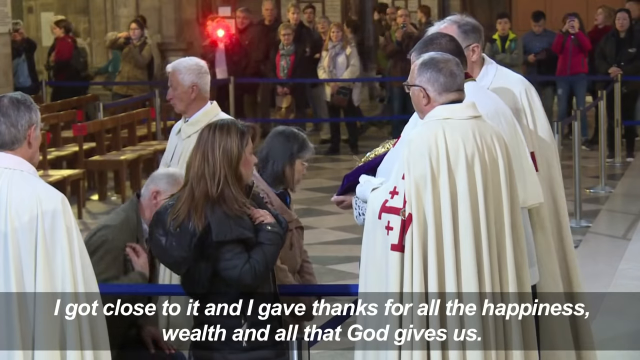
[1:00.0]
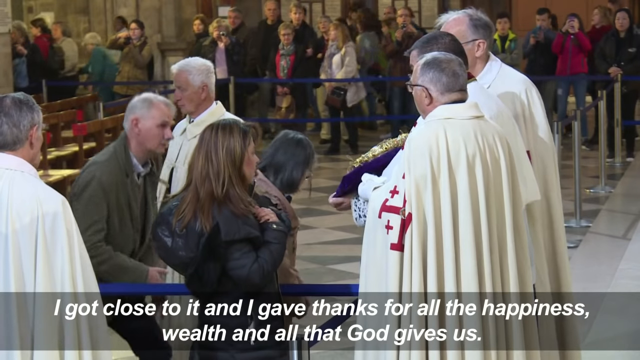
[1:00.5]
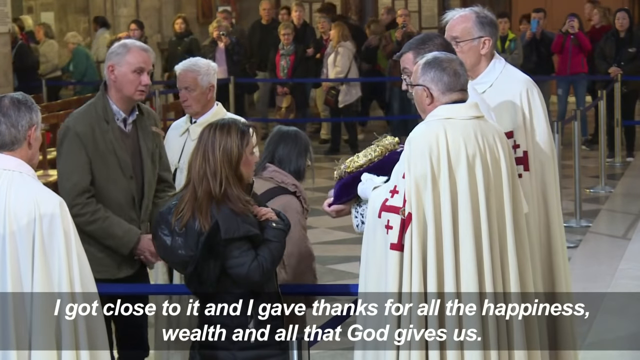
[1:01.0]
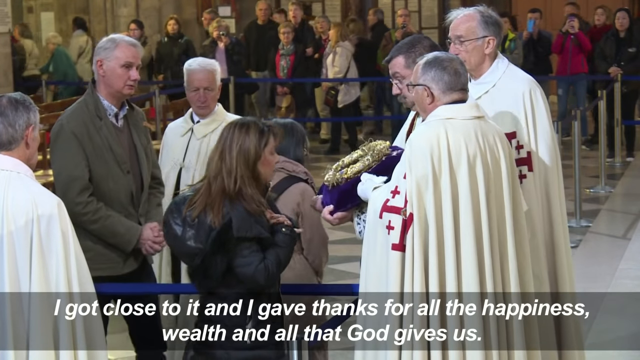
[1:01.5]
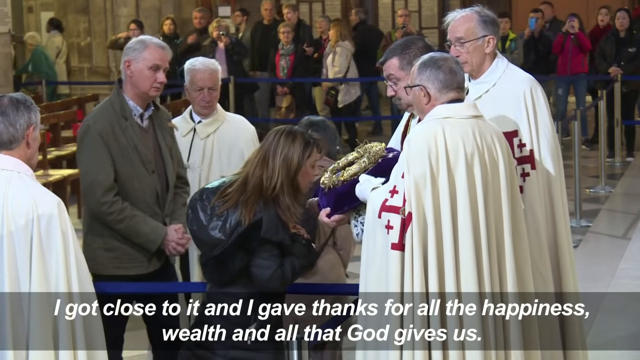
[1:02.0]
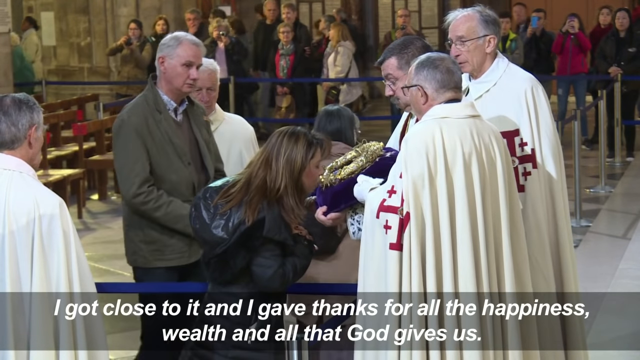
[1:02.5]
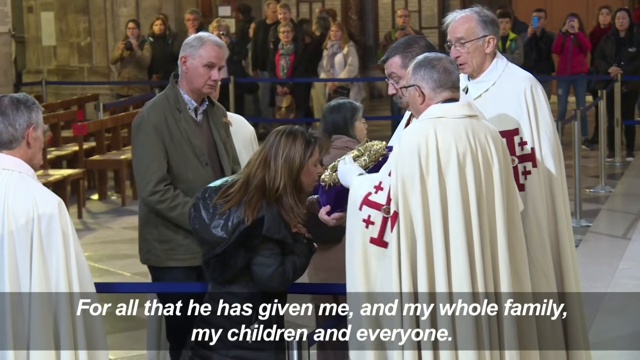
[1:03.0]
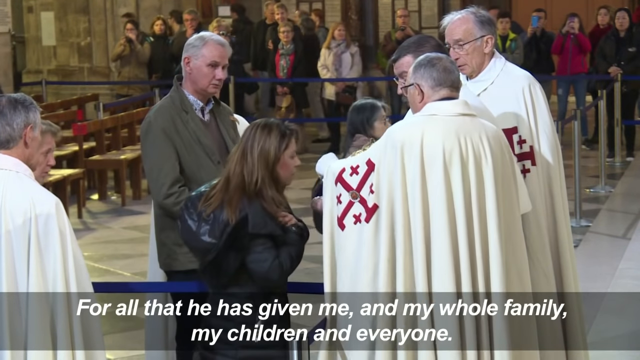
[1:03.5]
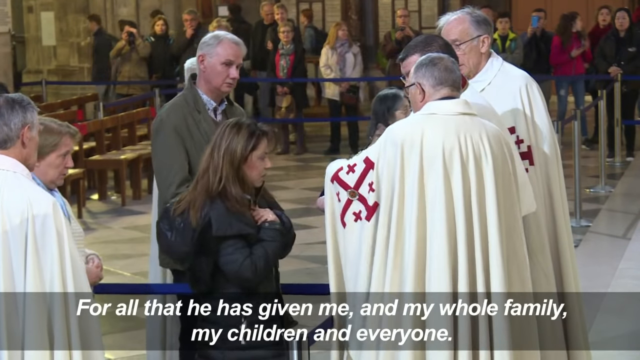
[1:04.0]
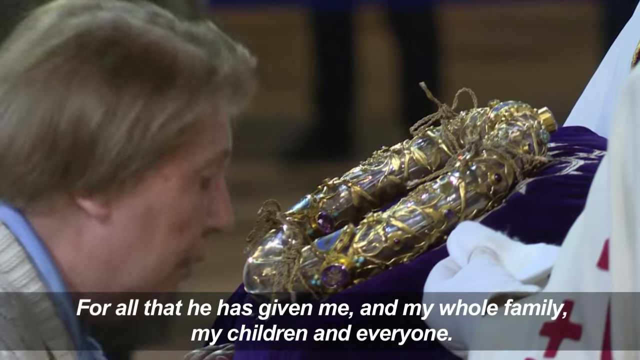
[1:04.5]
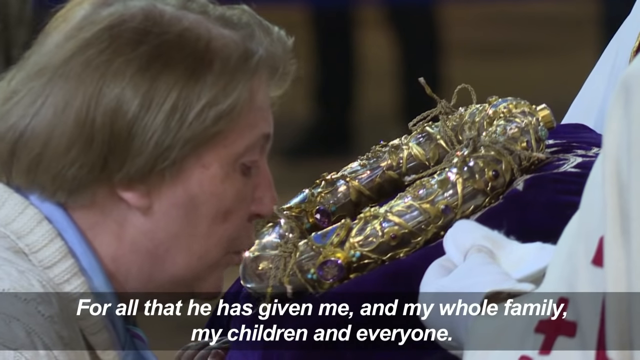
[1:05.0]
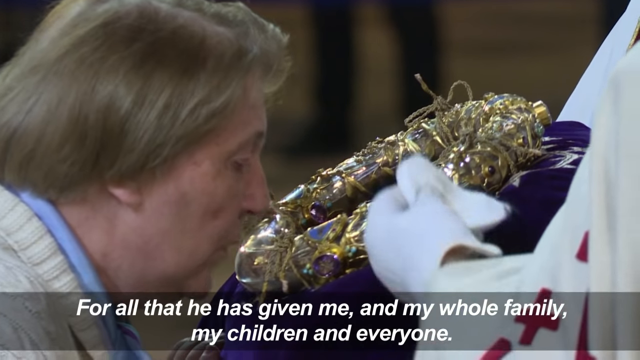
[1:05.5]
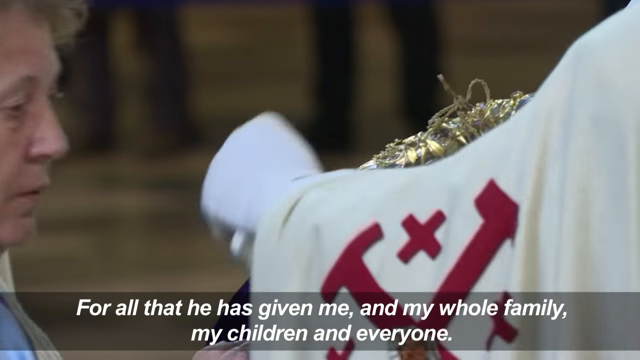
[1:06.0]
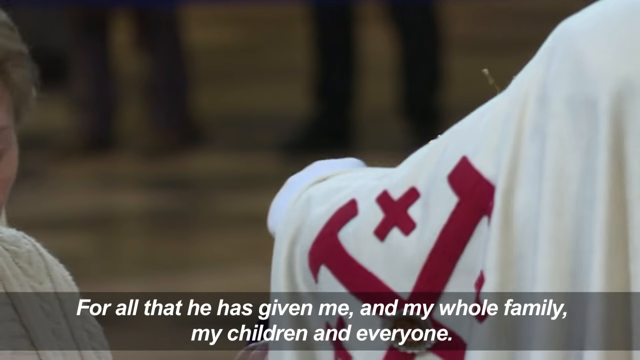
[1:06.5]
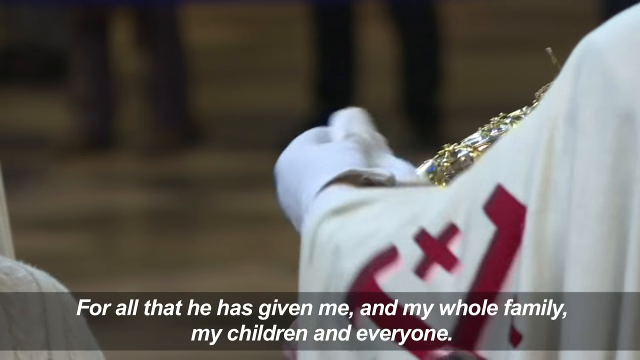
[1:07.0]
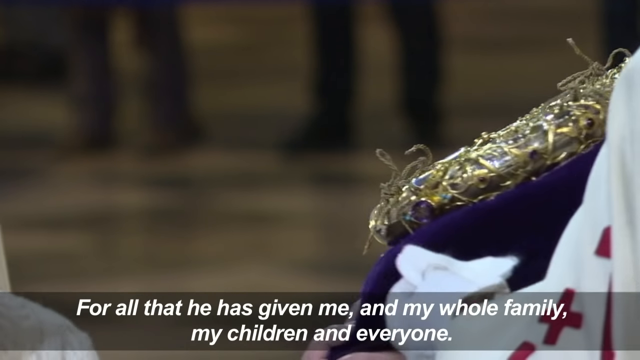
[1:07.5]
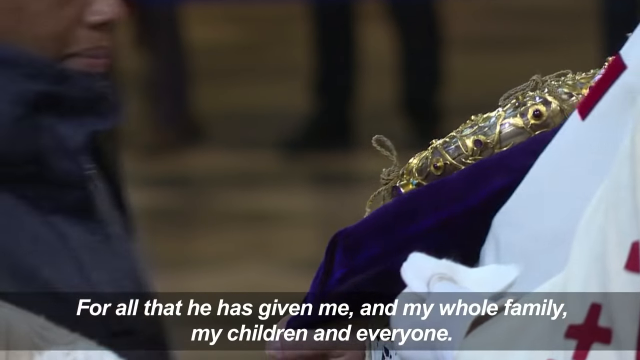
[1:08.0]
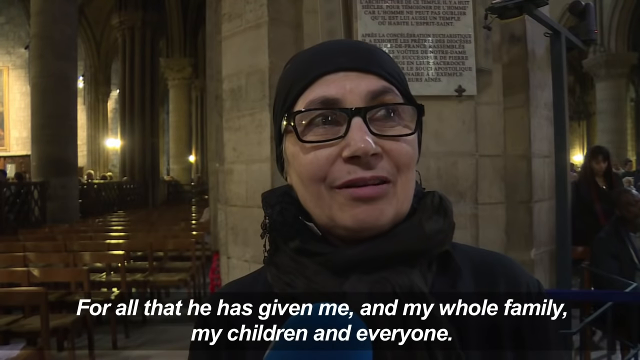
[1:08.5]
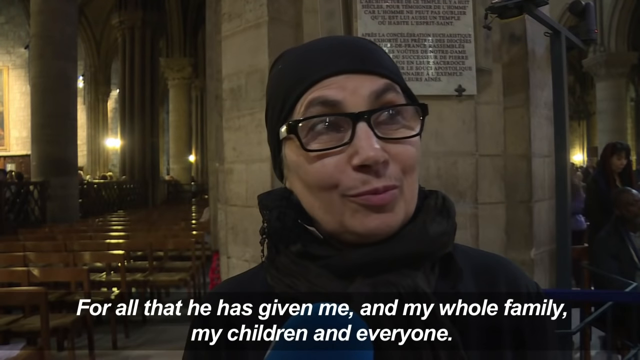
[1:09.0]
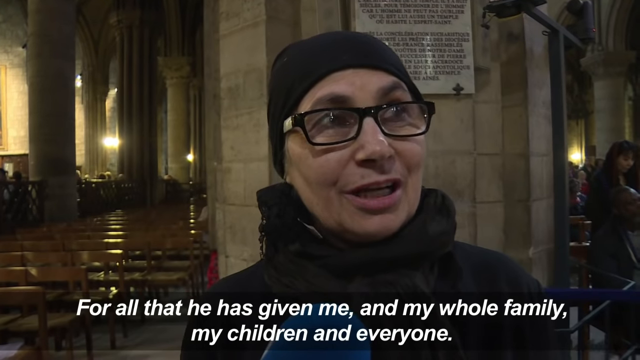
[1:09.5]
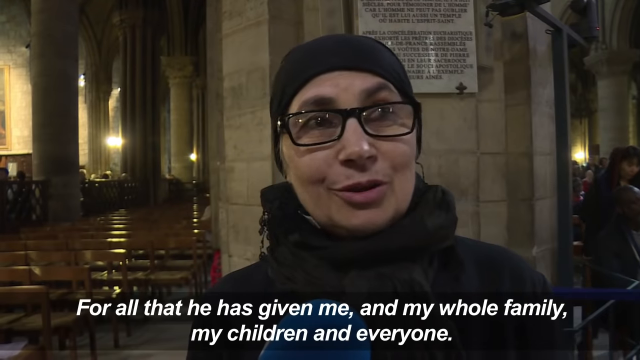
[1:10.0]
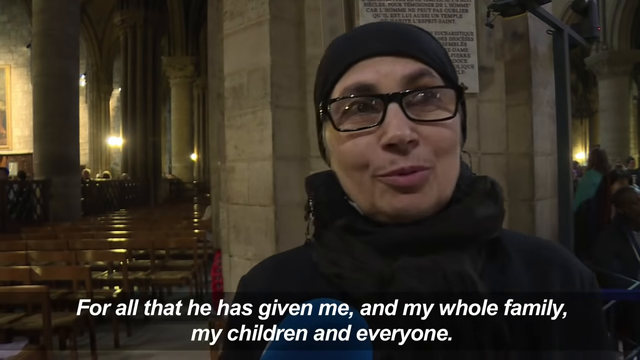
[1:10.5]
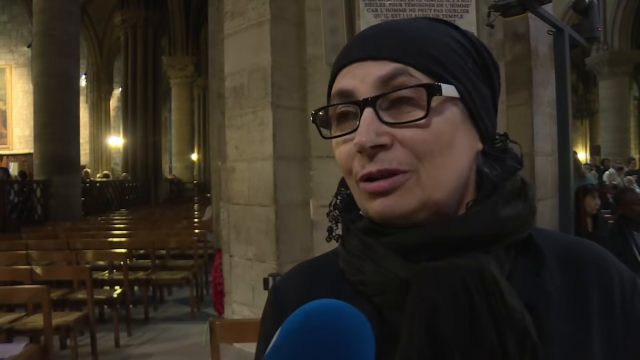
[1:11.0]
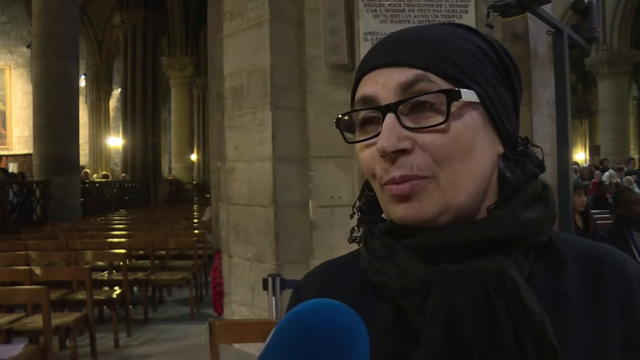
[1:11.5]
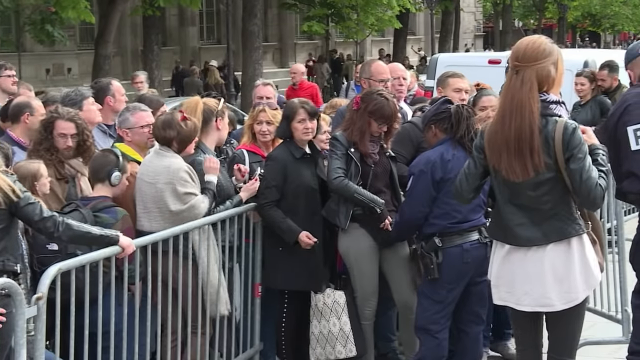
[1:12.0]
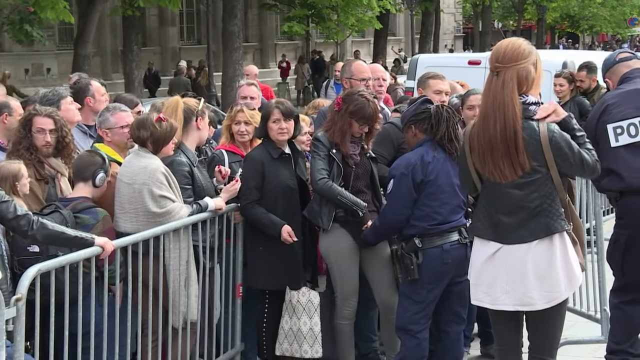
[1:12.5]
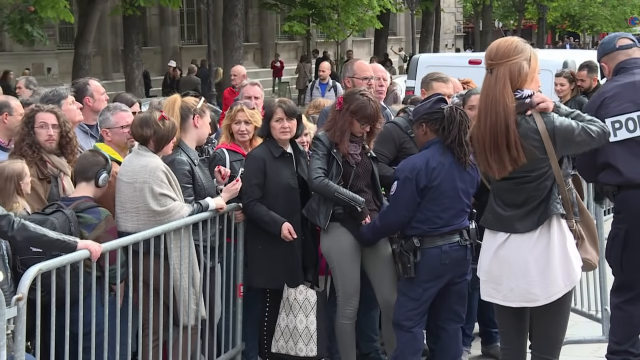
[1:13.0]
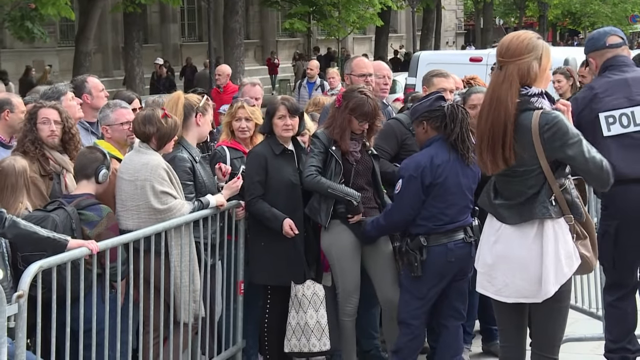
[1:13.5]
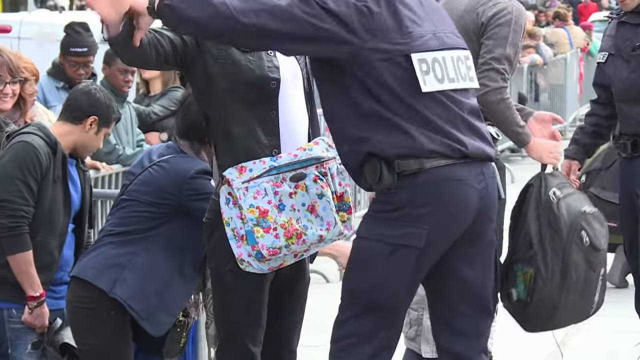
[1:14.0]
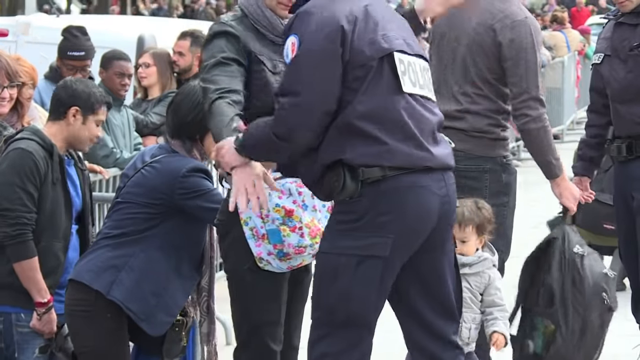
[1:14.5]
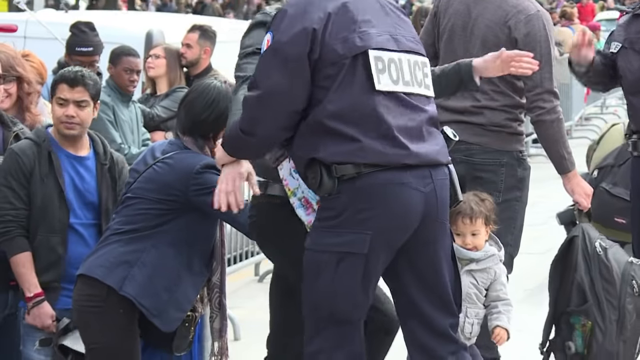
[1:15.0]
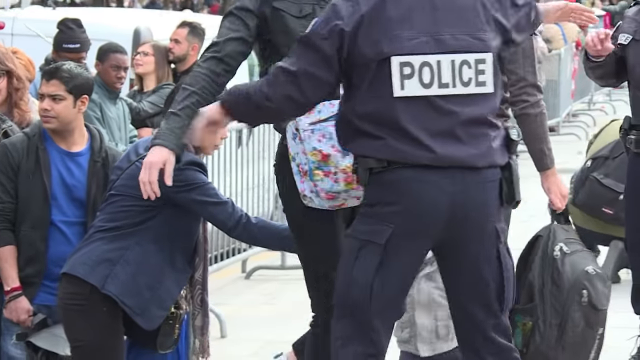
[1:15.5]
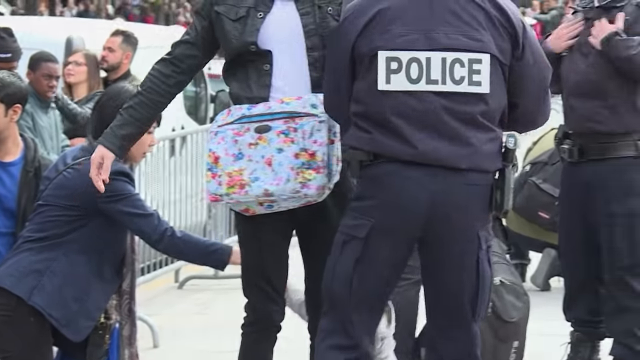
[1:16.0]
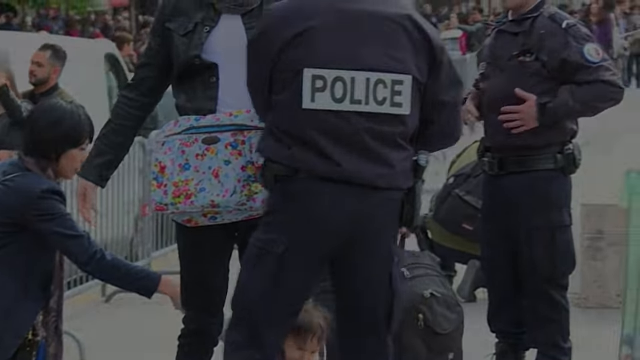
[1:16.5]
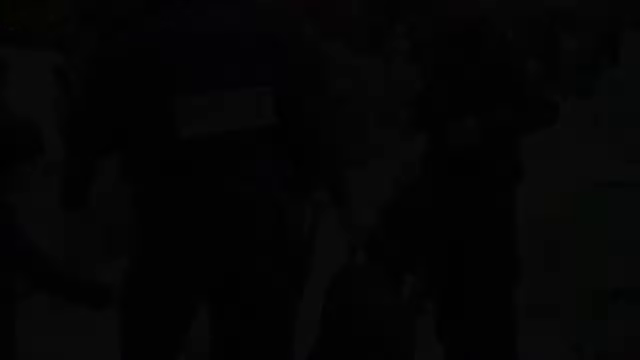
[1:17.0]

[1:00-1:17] The woman continues speaking about getting close to it and giving thanks for all the happiness and wealth that God gives, while people are shown kissing the crown and priests hold it. She goes on to mention all that he has given to her, her whole family and her children. The scene then changes to people standing outside, where police are frisking people before they go in. The video ends there, without a wrap-up.